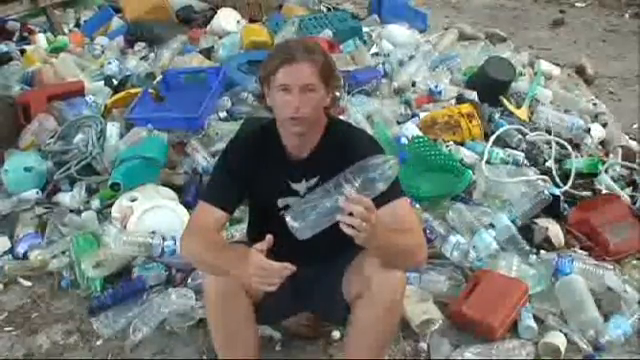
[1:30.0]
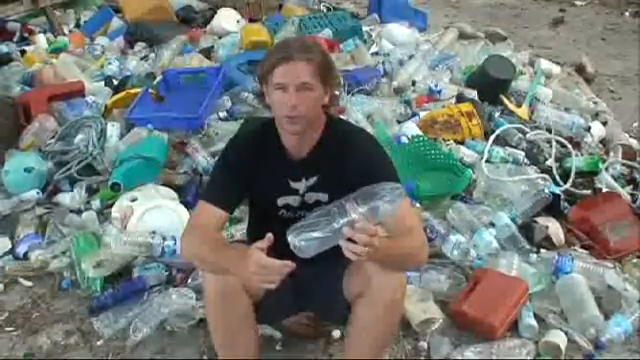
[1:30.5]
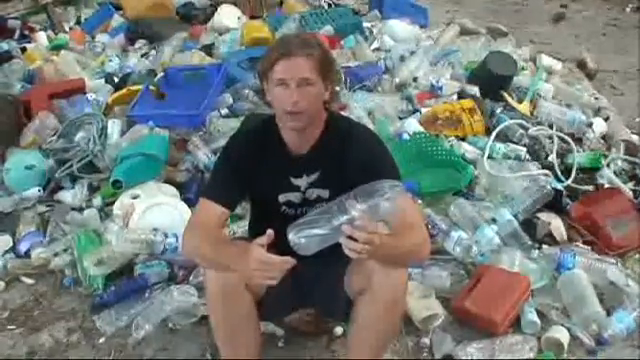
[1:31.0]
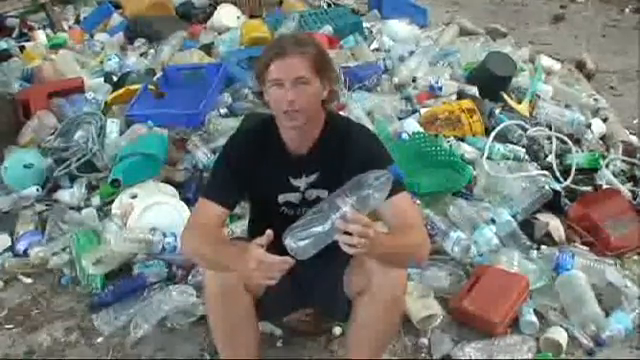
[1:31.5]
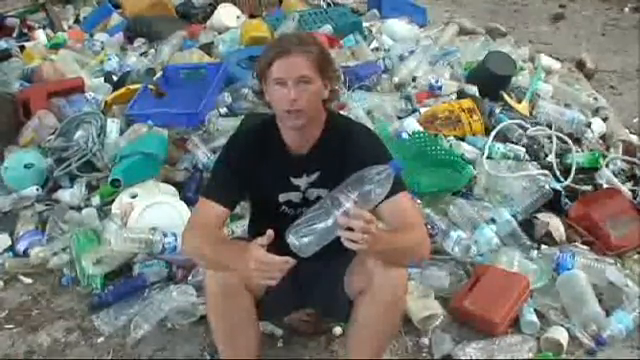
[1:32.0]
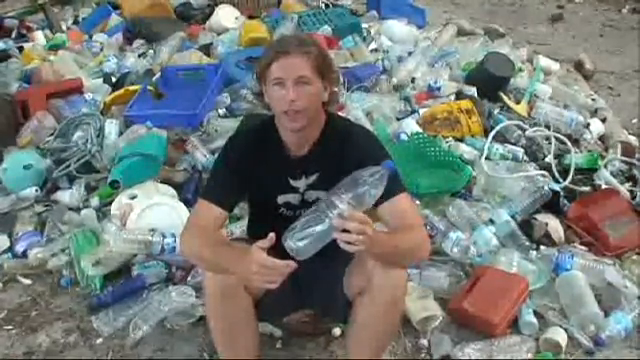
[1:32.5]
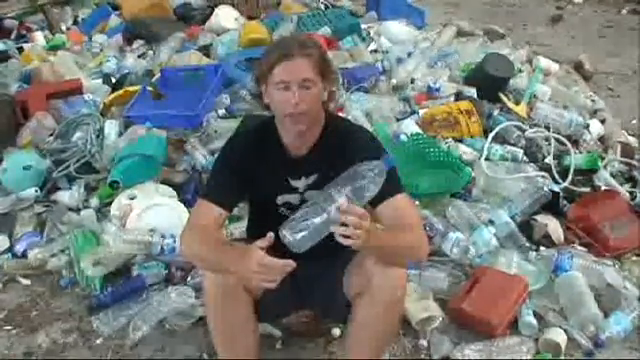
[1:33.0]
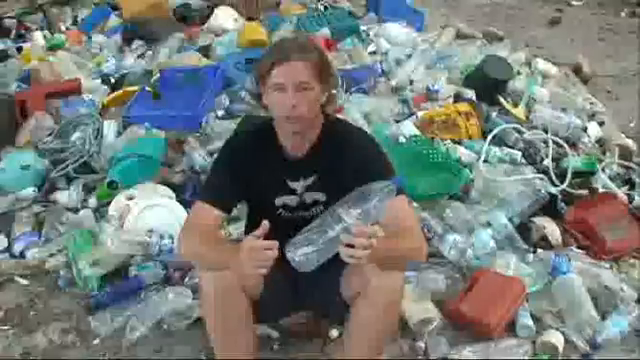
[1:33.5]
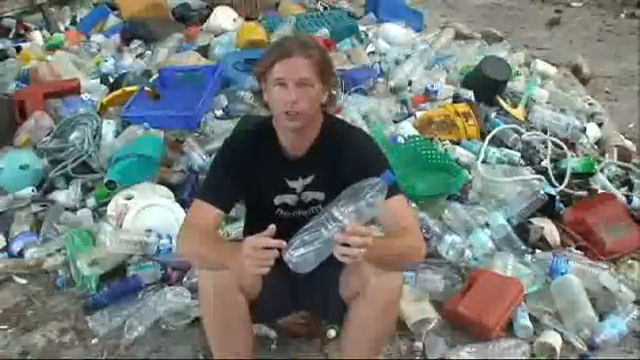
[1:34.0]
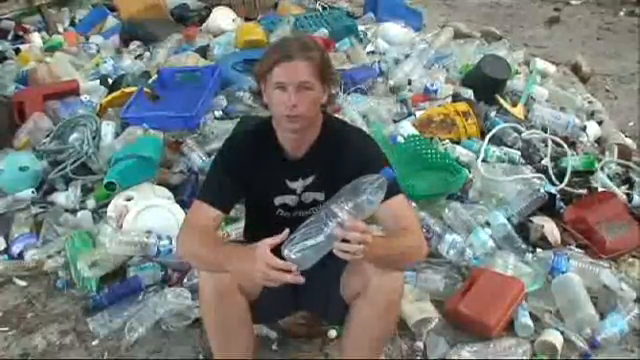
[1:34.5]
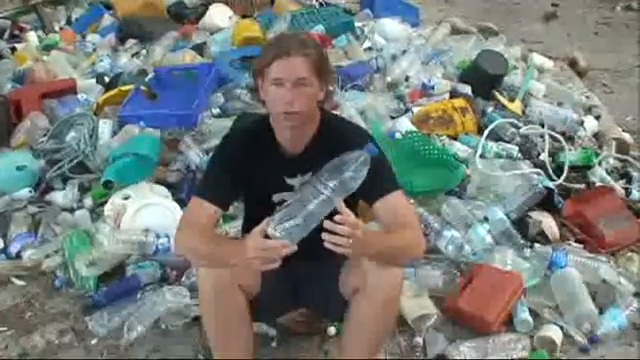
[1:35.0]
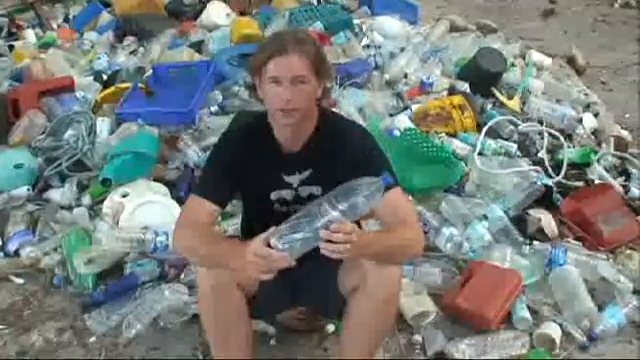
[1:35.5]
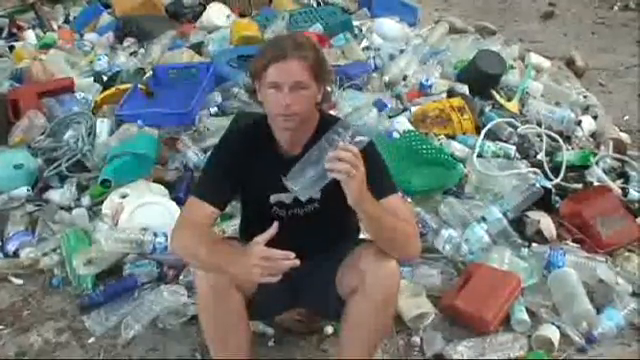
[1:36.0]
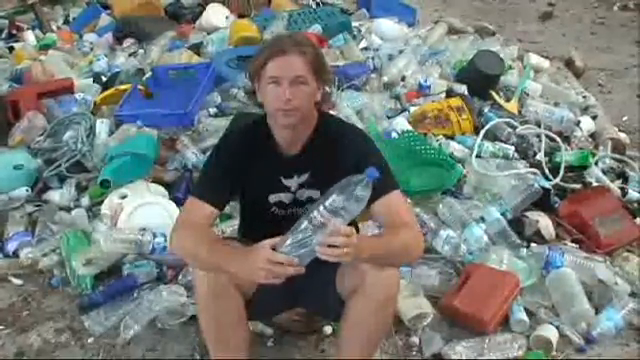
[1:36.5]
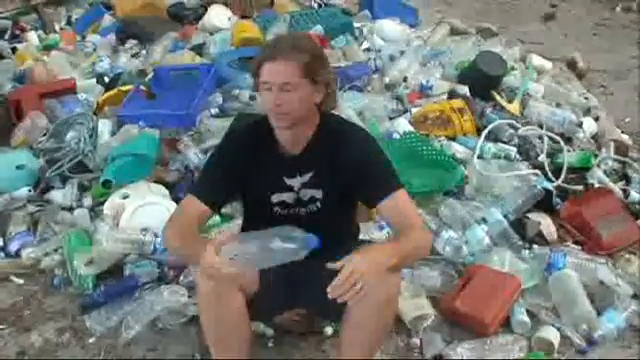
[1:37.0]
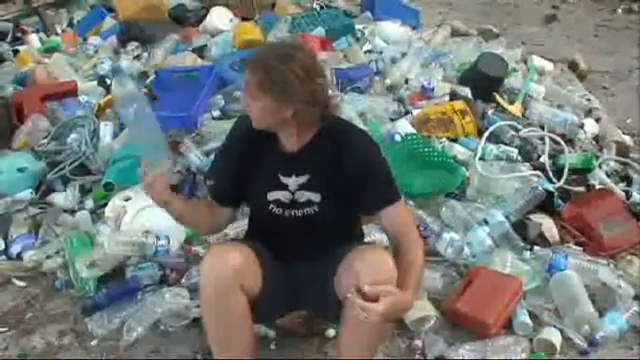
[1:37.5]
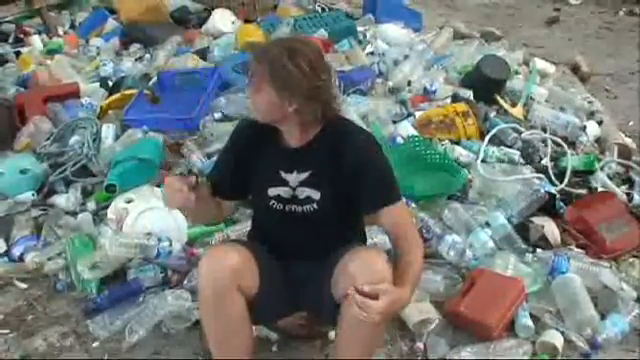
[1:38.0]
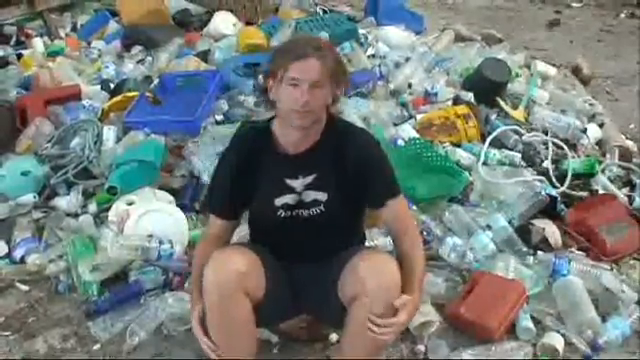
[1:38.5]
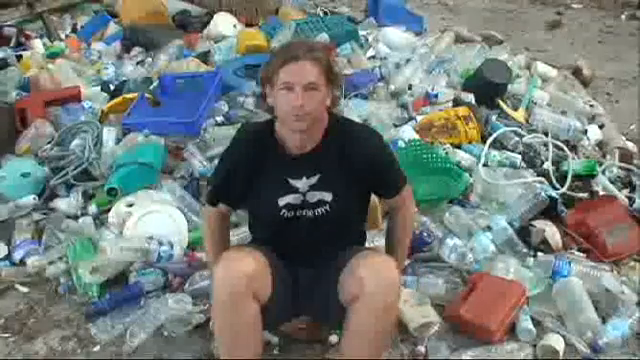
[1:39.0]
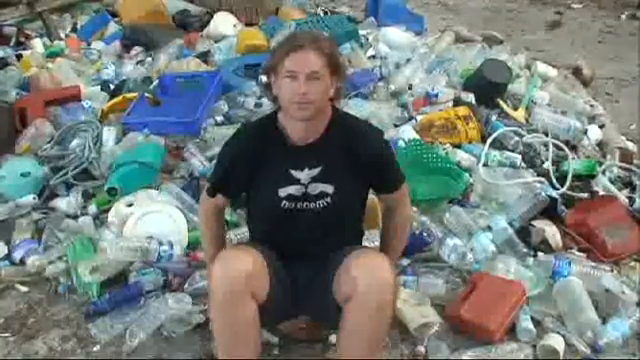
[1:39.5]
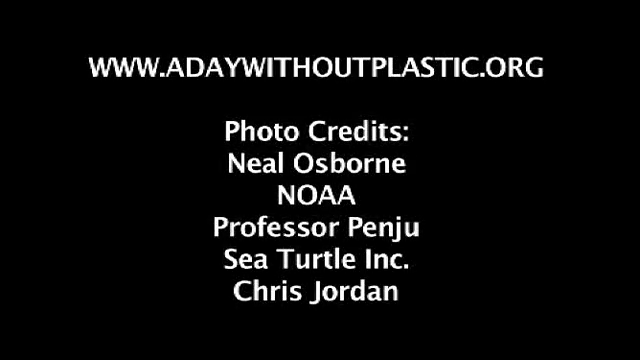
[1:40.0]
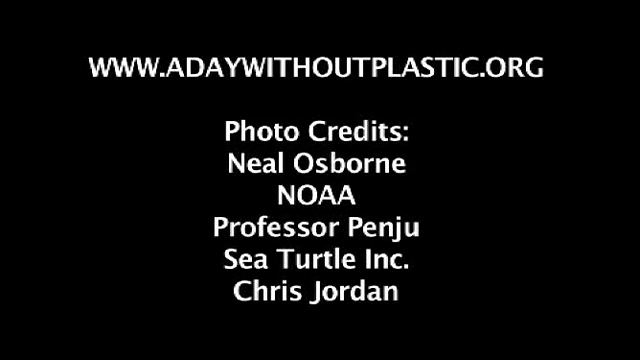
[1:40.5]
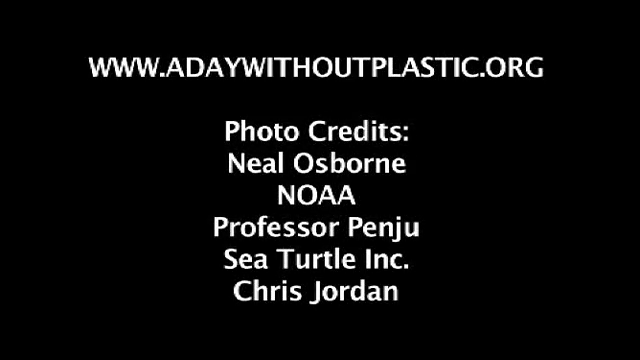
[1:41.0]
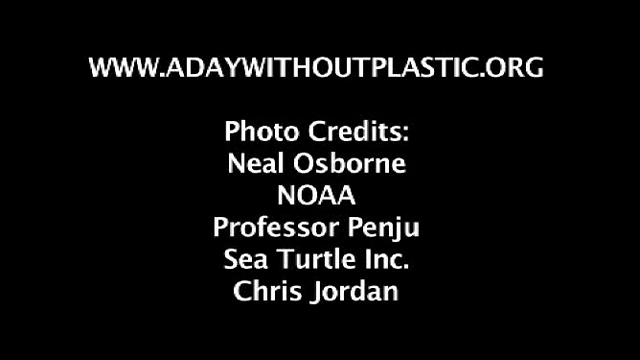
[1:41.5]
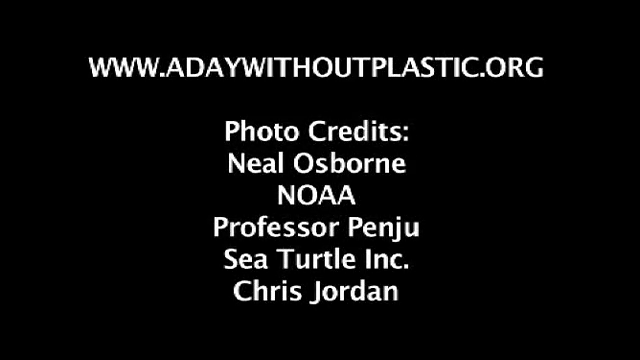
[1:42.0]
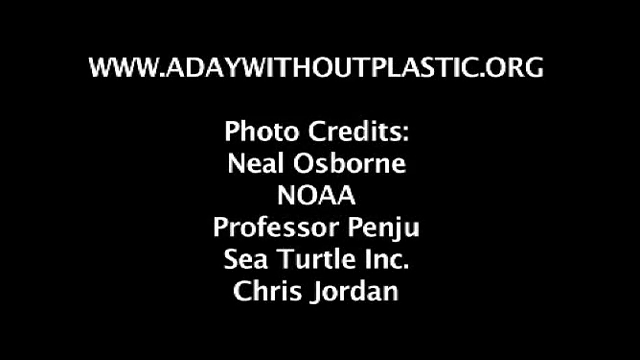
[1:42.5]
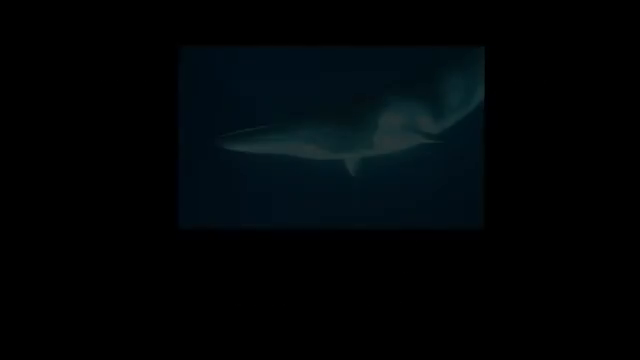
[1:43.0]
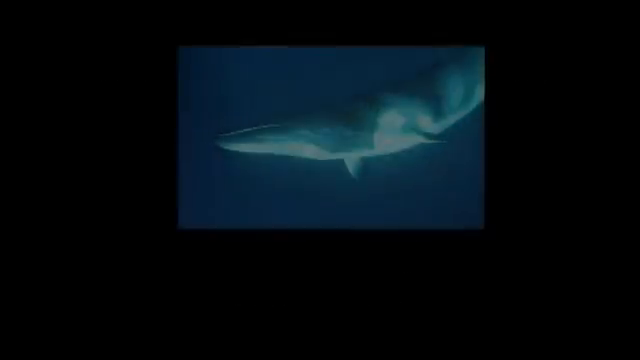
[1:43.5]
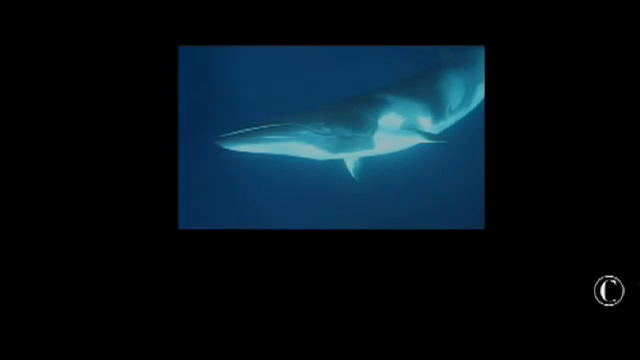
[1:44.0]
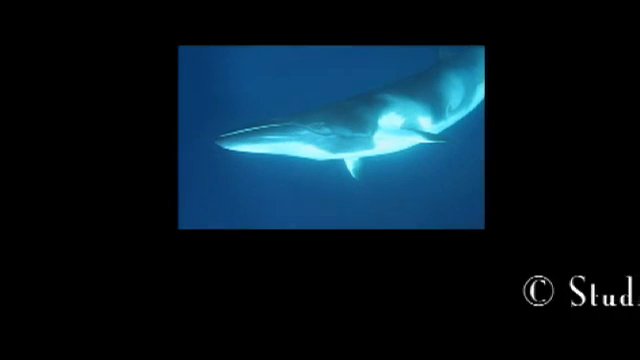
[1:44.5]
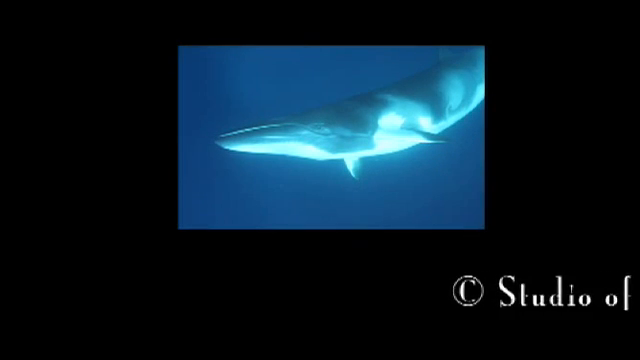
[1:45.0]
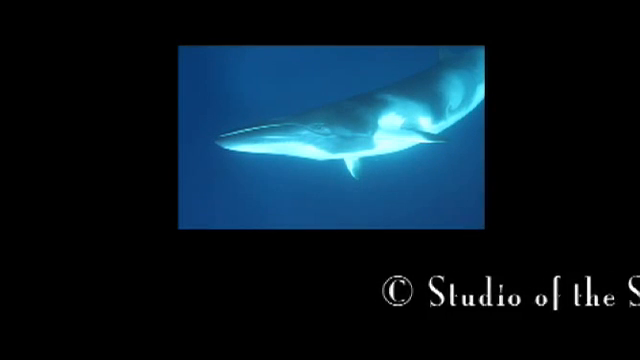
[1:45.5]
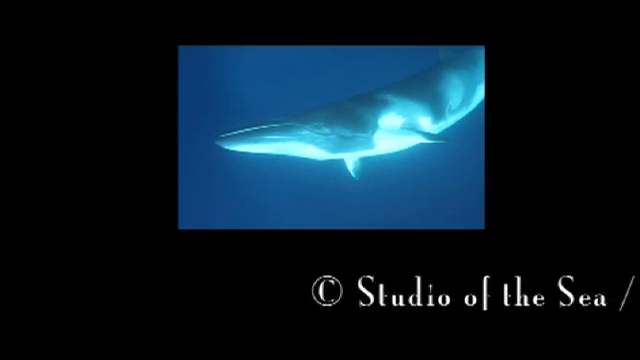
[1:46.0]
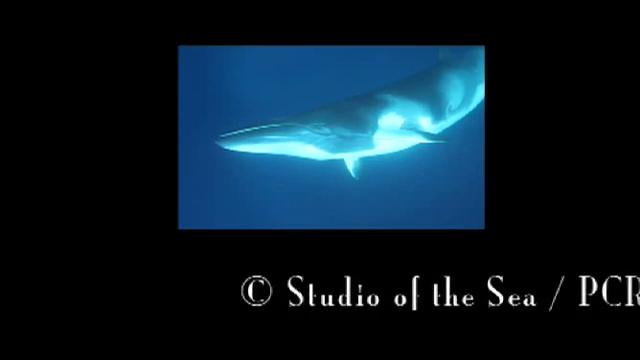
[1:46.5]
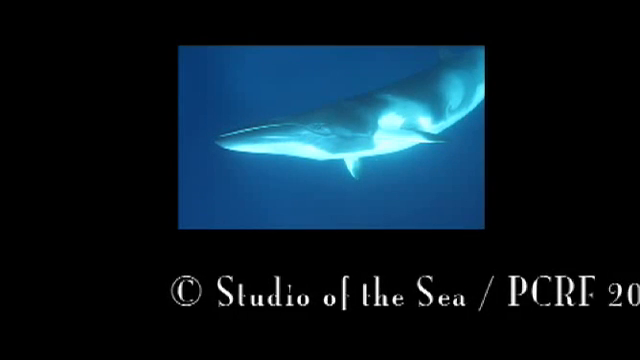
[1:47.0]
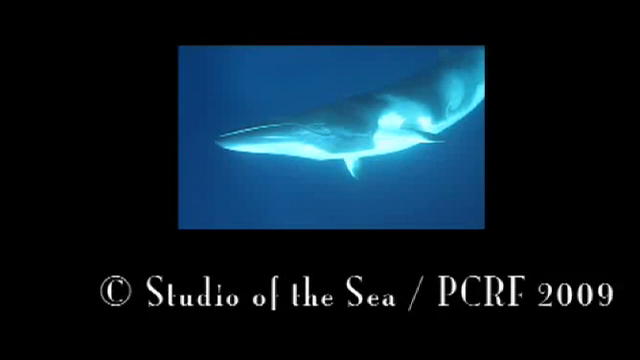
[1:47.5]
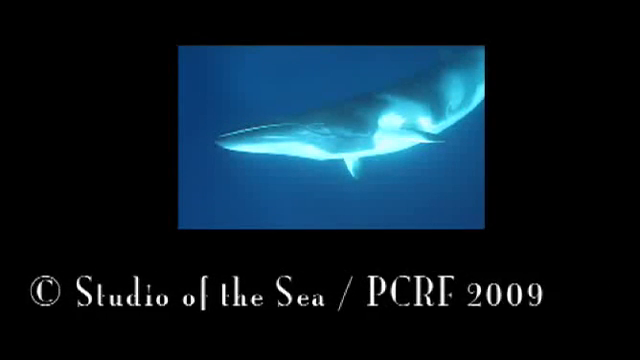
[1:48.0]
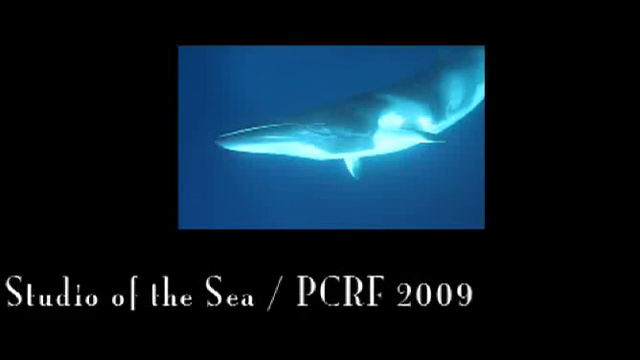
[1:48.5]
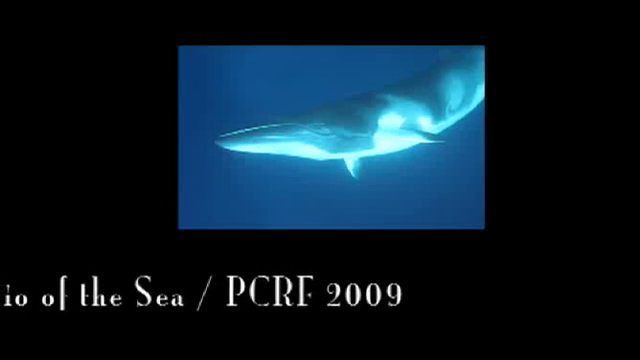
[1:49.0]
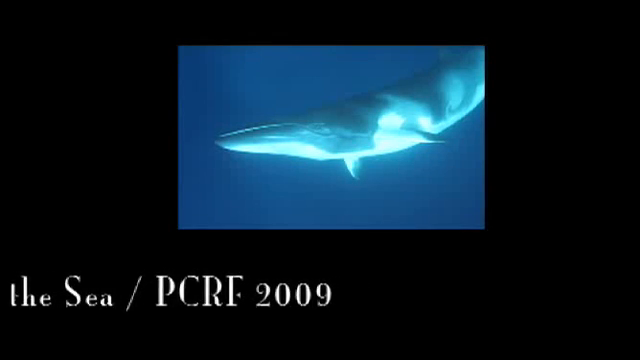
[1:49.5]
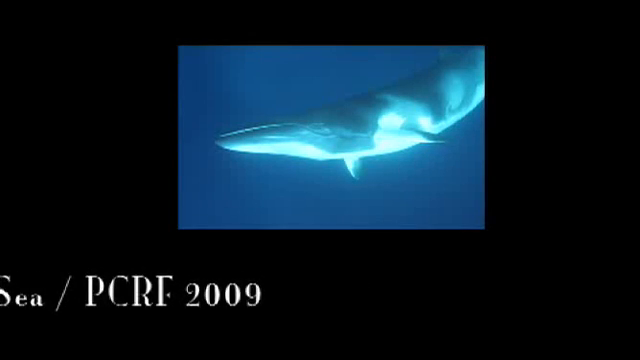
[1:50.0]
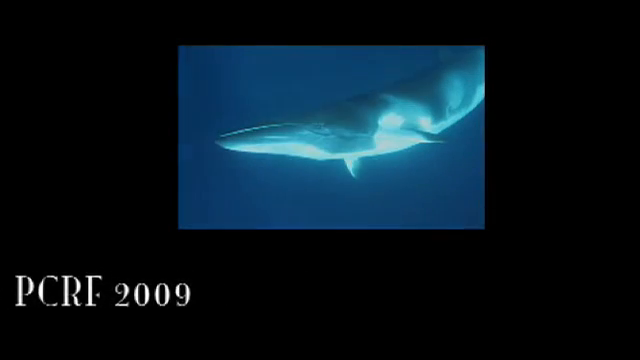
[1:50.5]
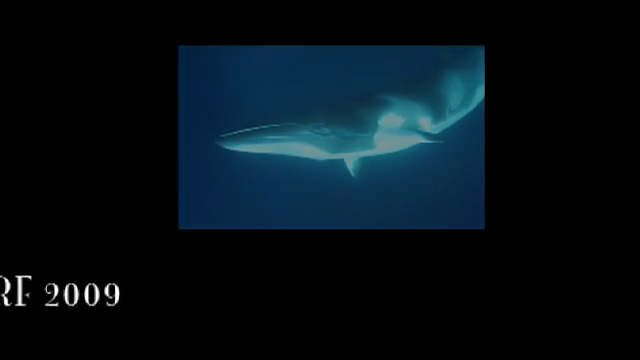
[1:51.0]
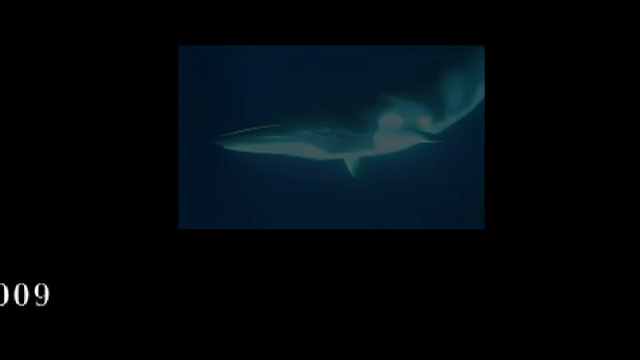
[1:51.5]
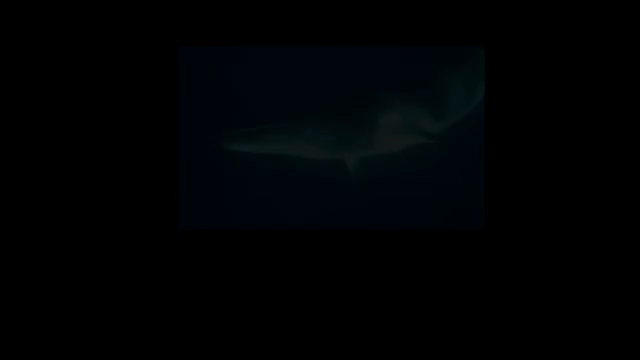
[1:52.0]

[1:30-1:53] The man is still sitting on a pile of trash, holding a transparent bottle with a blue lid. He keeps moving the hand holding the bottle as he speaks to the camera, switching the bottle between his hands. He then throws the bottle behind him onto a pile of trash and wipes his hands on his shorts. The screen becomes black and shows words: at the top is a website, "www.adaywithoutplastic.org", in capital letters, and below it are the words "photo credits", followed by names: "Neal Osborne", "NOAA" (which looks like the name of an organization), "Professor Penju", "Sea Turtle Inc" and "Chris Jordan".